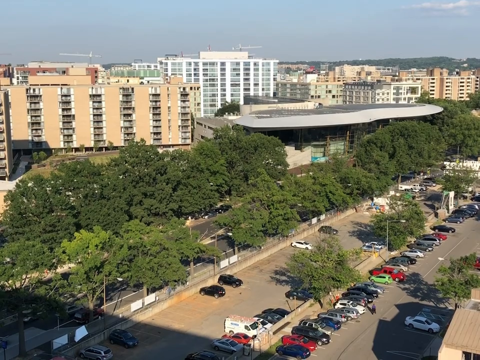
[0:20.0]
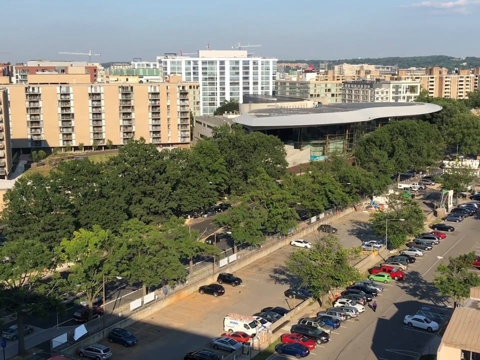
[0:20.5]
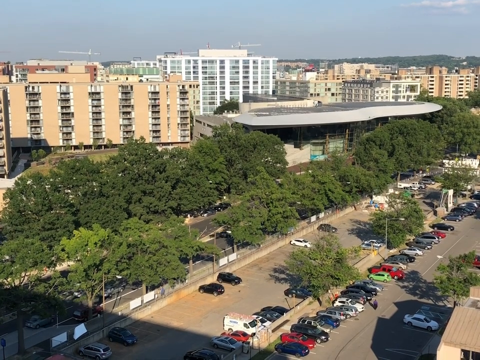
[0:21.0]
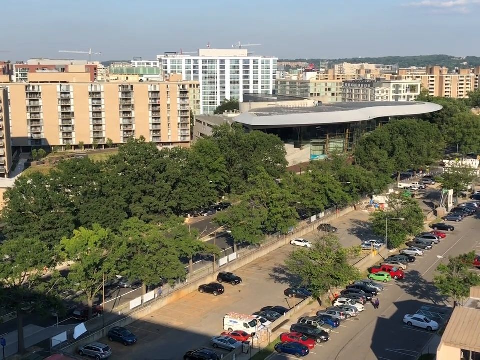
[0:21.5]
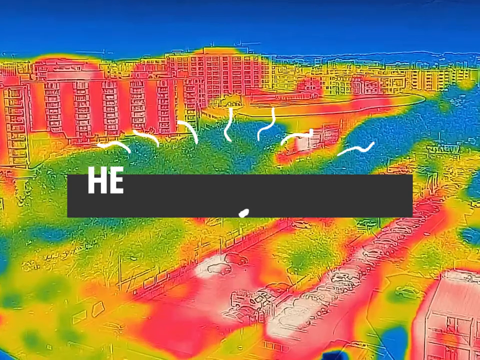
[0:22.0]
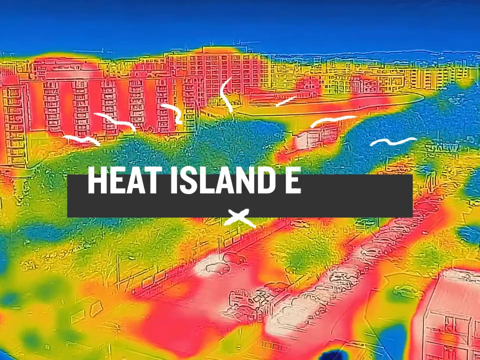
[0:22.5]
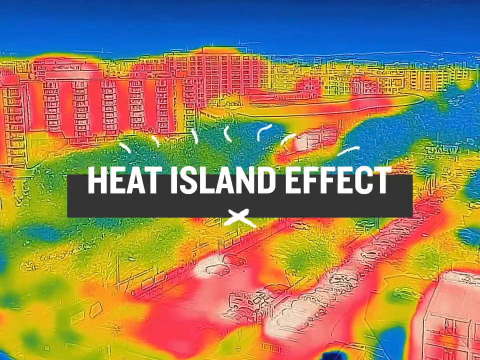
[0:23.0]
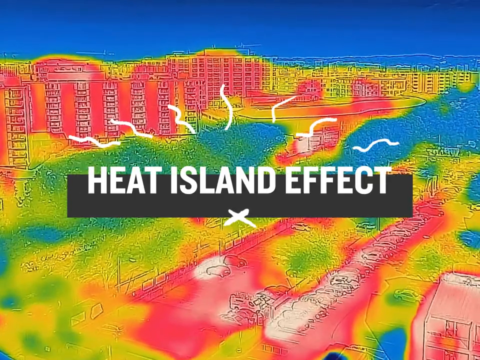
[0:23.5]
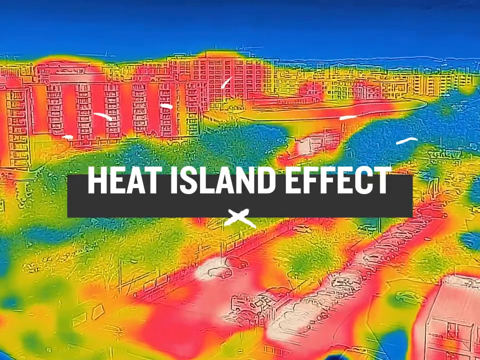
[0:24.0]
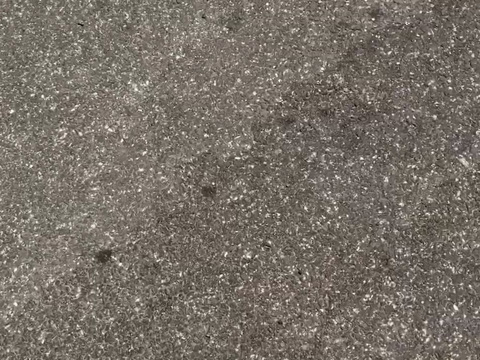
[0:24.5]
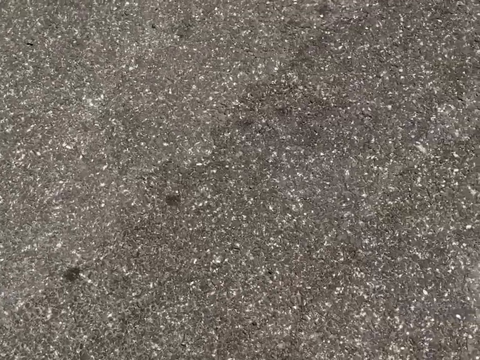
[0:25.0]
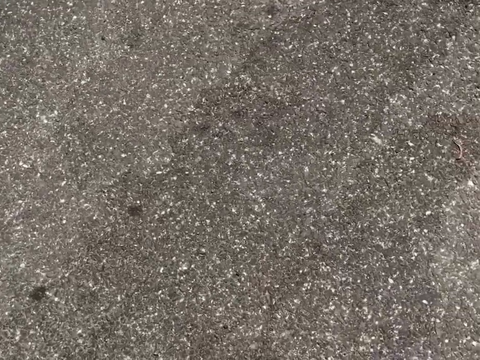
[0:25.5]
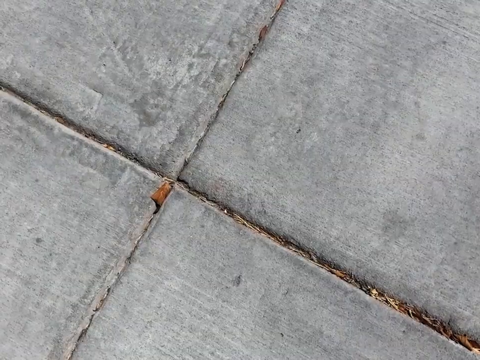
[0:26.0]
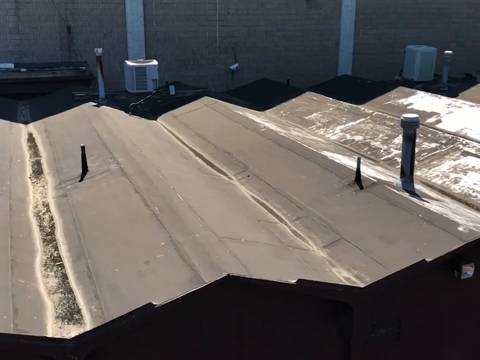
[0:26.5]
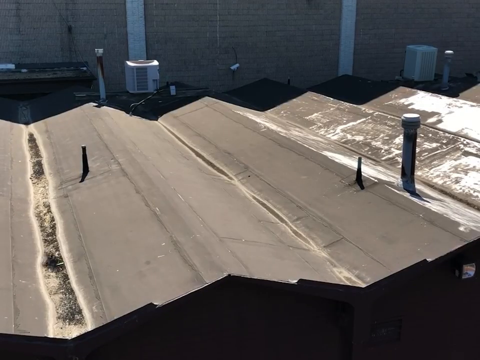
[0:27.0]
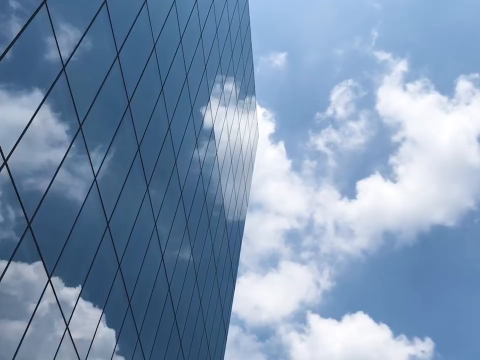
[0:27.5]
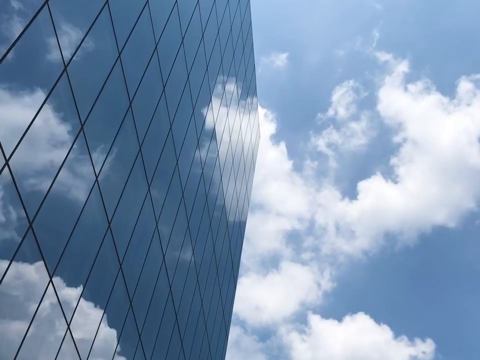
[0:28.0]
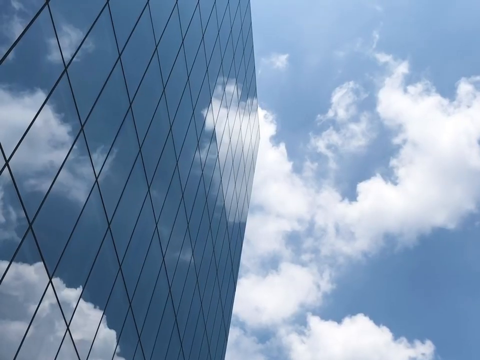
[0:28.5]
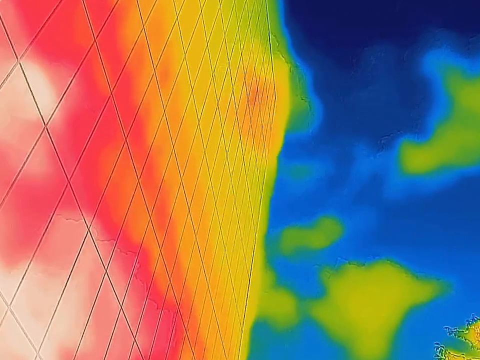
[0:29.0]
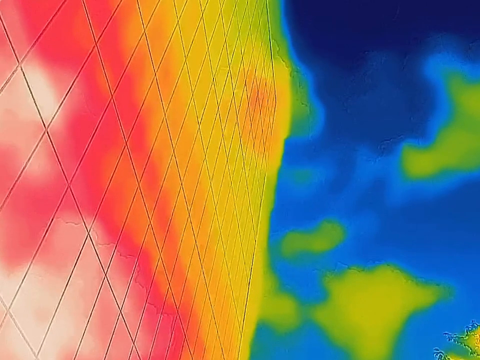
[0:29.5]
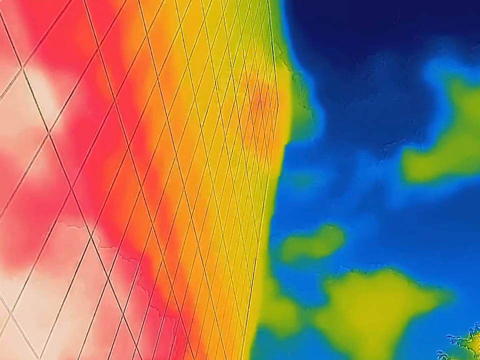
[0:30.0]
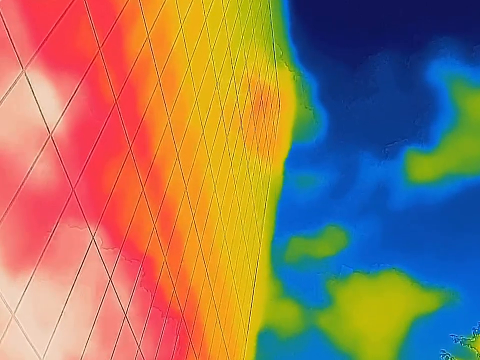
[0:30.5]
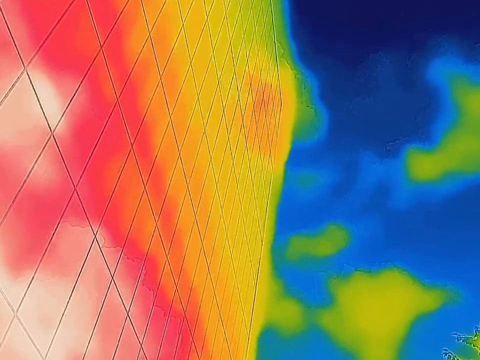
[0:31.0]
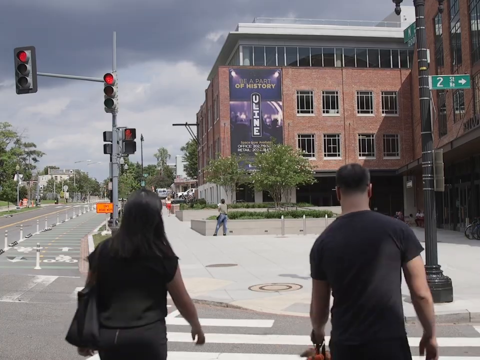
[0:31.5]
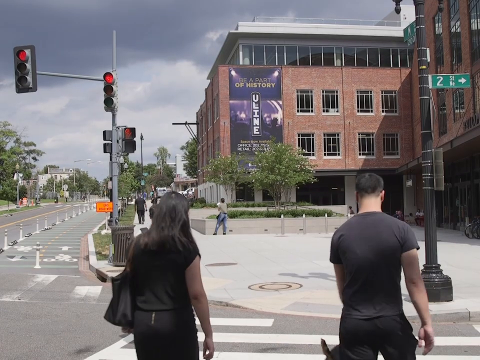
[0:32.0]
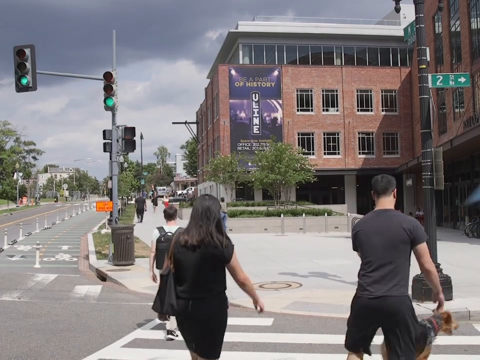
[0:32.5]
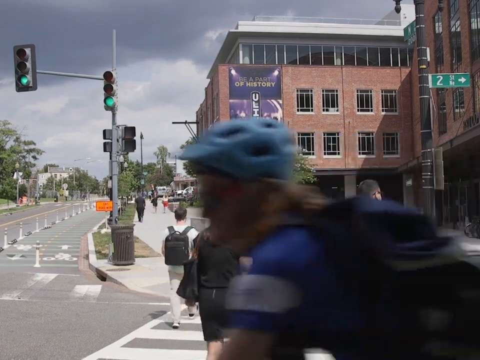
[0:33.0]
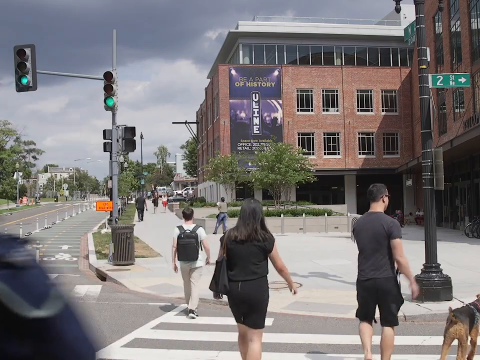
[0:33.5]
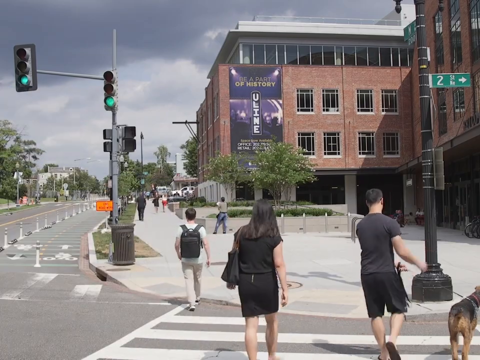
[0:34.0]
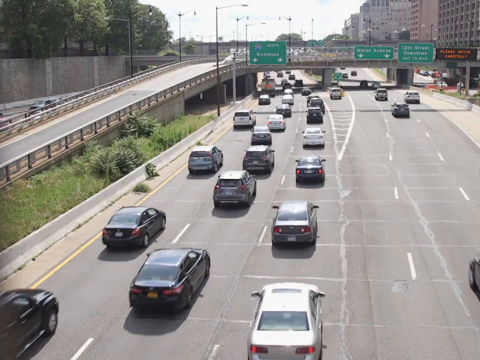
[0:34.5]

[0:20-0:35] A scene of a city center shows a parking lot in the bottom right with a lot of parked cars, a few trees, and a lot of buildings behind it. The scene changes to the heat map effect, and in the center of the screen the text reads "heat island effect." Different ground surfaces follow, such as asphalt and sidewalk, along with what looks to be a tin metal roof and a glass corporate building; the heat map effect is applied to the glass-windowed corporate building. Next, a man and a woman walk on a sidewalk with their dog; they seem to be the main subject, with a few people around them. A quick glimpse of a highway follows, with a lot of cars driving along in what looks to be midday traffic, shown in a basic bird's-eye view with no heat map effect.